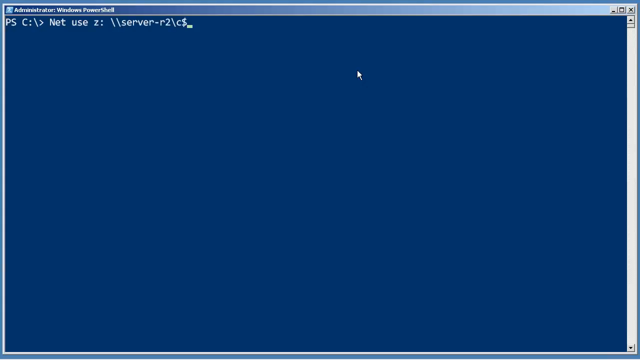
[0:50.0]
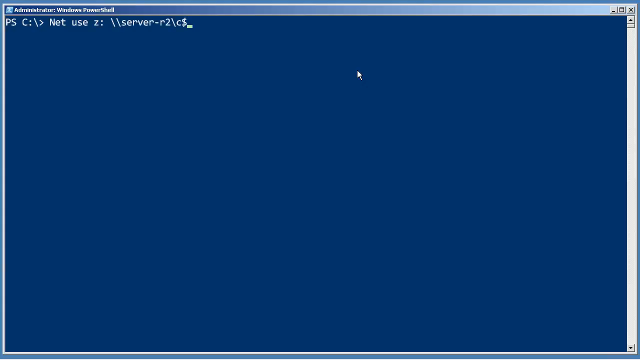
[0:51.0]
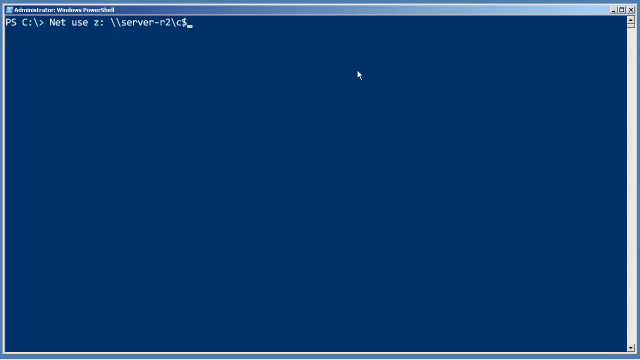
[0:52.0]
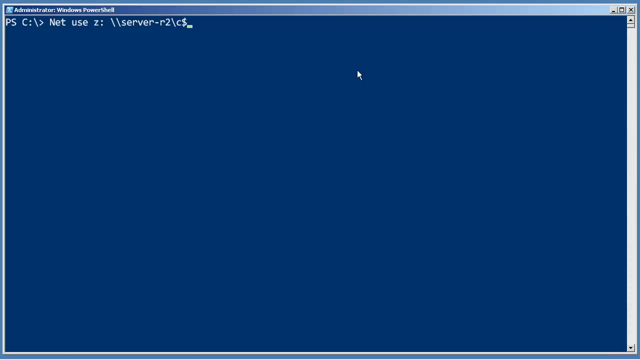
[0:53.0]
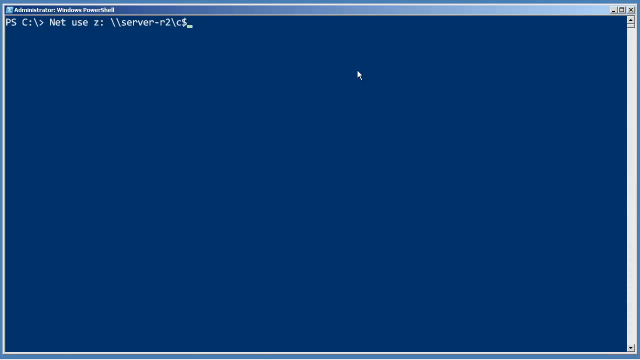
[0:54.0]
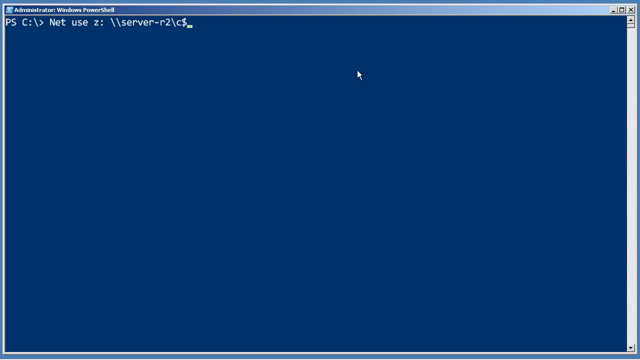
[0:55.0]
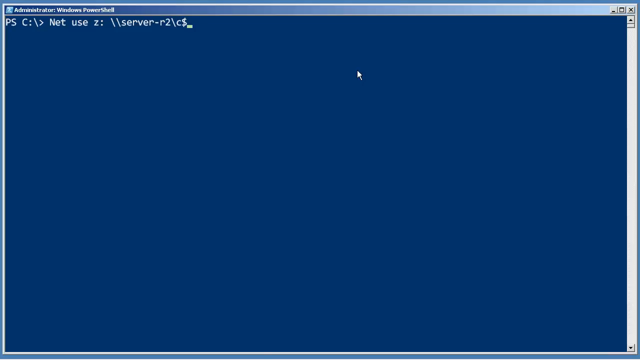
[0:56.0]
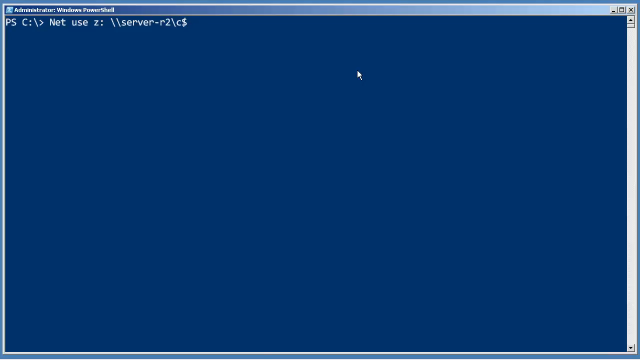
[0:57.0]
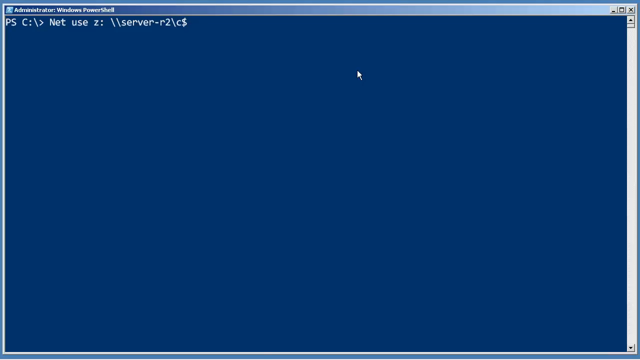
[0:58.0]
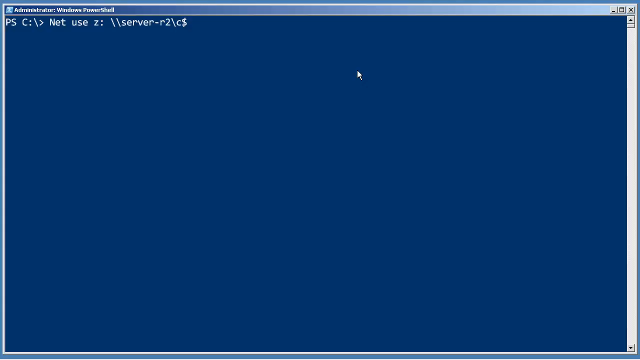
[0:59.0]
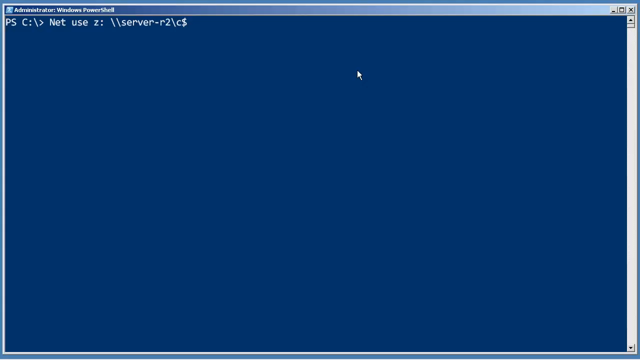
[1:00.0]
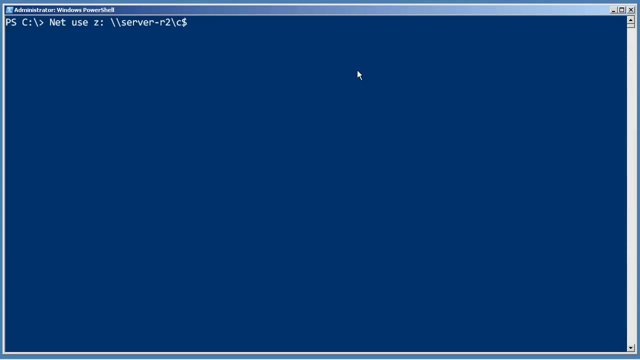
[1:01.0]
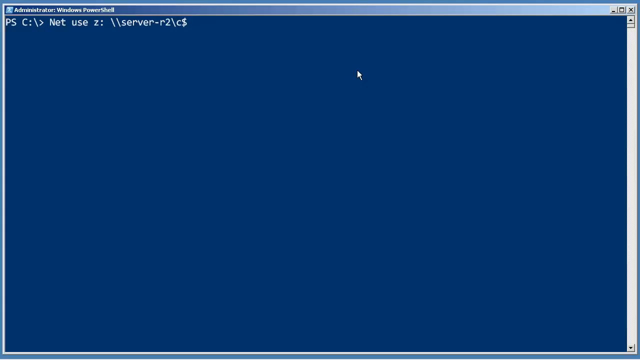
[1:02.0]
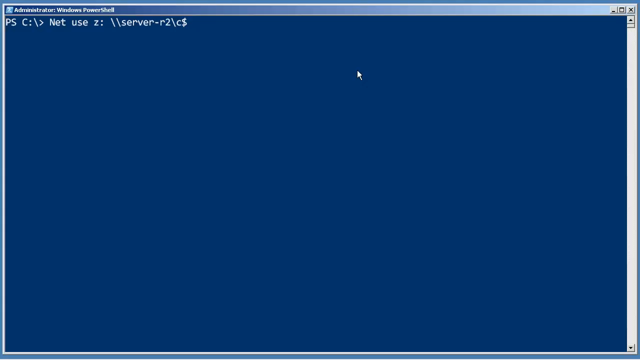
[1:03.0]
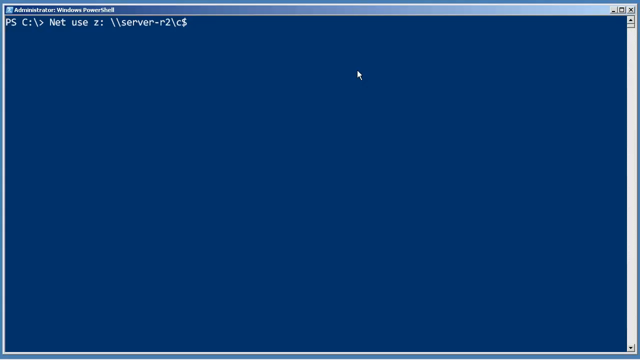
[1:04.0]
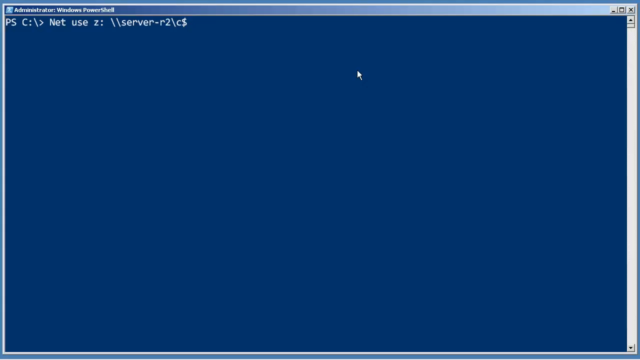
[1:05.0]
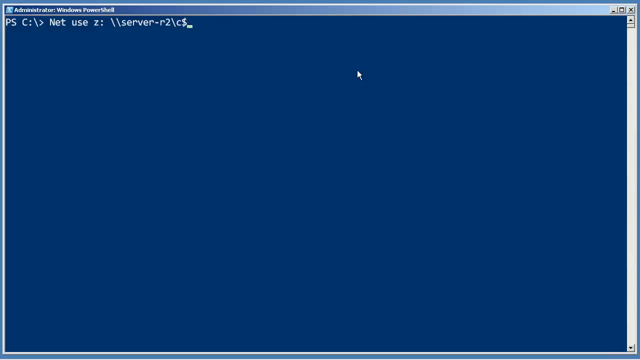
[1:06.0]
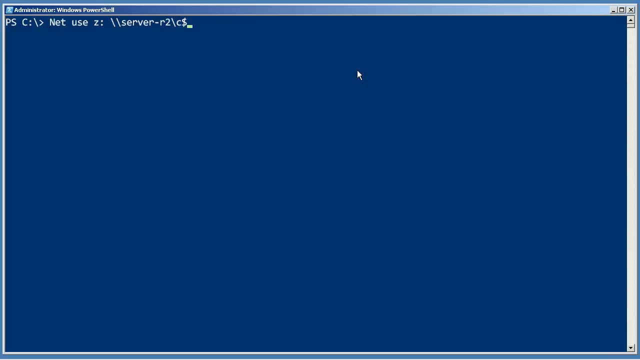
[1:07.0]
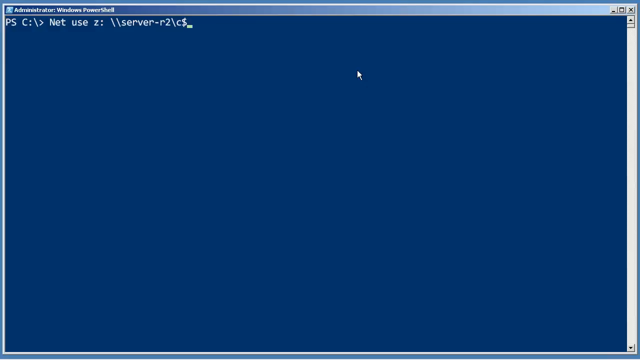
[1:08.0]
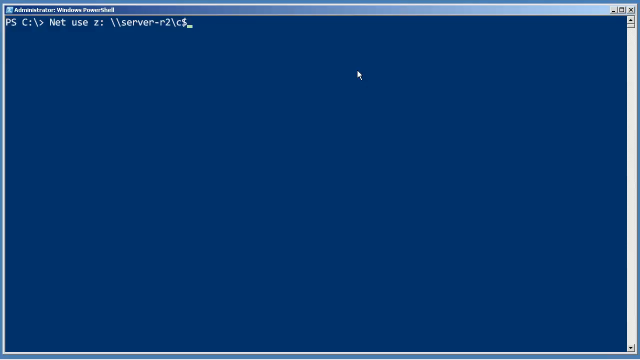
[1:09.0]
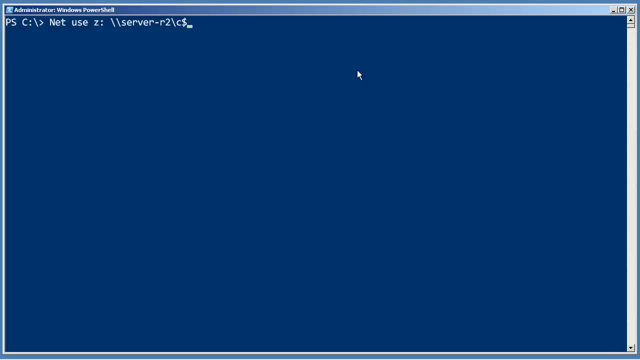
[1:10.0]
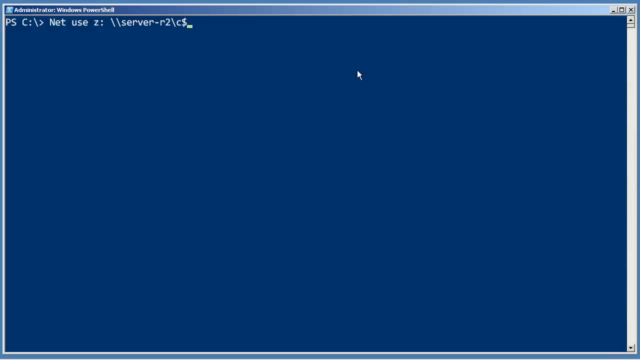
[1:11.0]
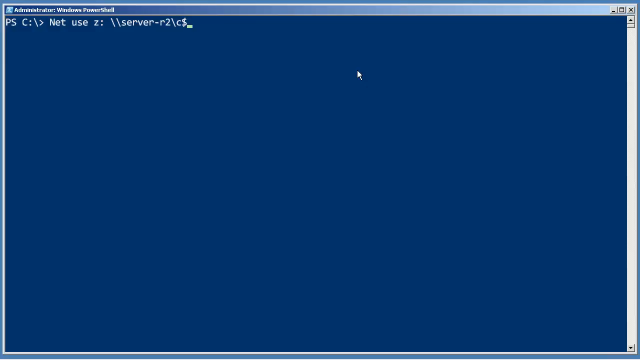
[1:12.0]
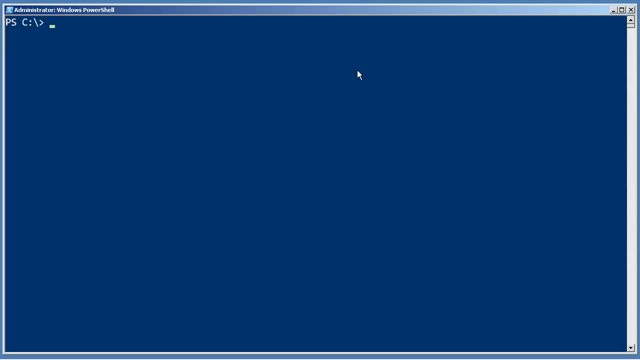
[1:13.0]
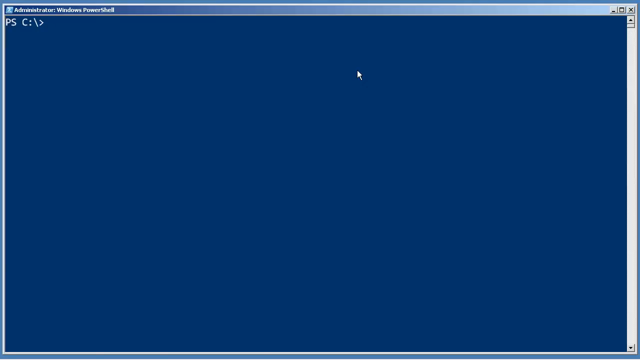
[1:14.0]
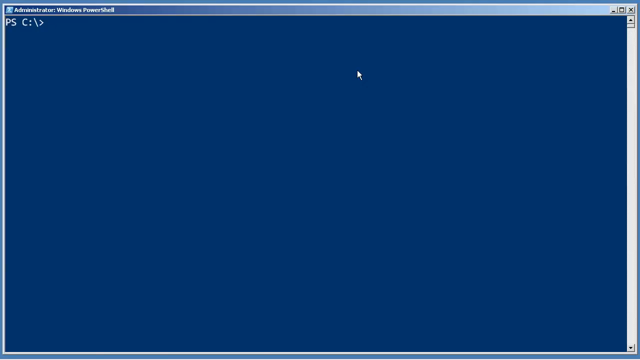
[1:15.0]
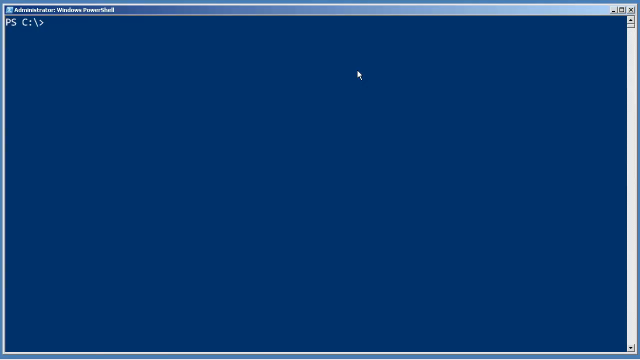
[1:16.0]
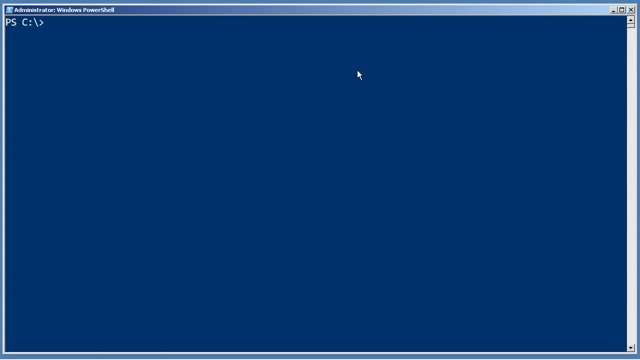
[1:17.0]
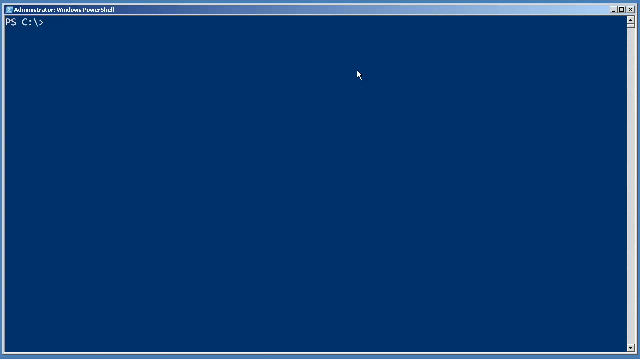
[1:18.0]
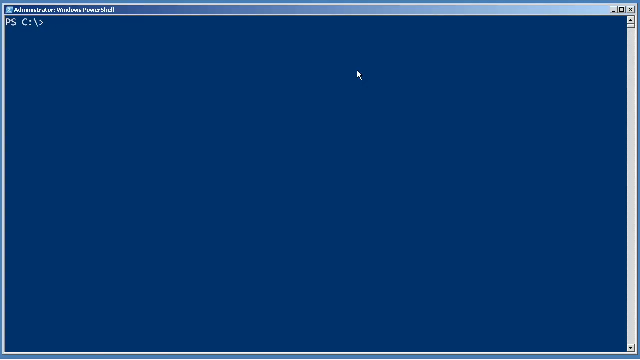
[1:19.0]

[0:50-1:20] The typing cursor, a flat white rectangle near the bottom of the text entry space, continues to blink. The line of code that was written is then suddenly deleted, and the cursor keeps blinking; the text has apparently either been removed in one swipe or been run. The text is in a normal coding-like white font, with very clear letters contrasting against the dark blue background across the entire screen. The mouse cursor is near the center of the screen and closer to the top, approximately a couple of lines below where text is being entered, and its position does not change. A very thin scroller runs along the rightmost border of the screen.